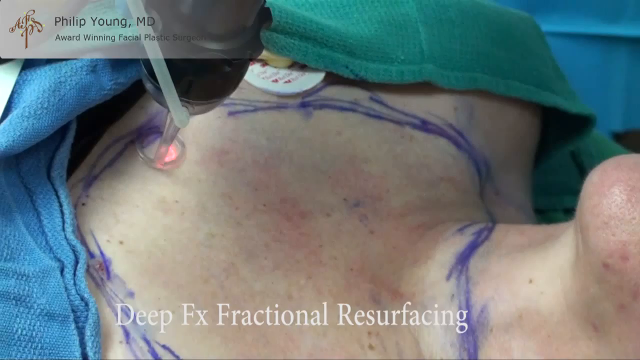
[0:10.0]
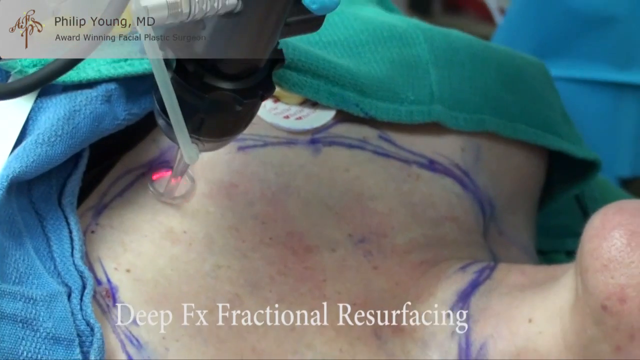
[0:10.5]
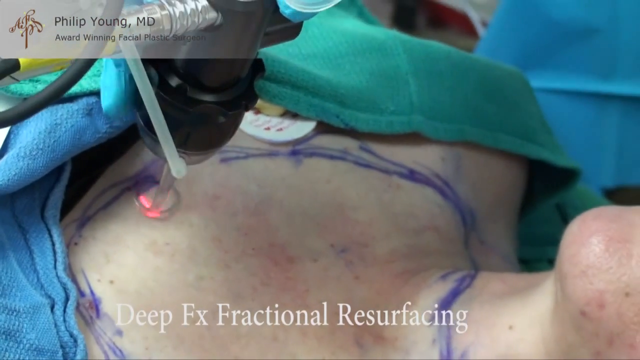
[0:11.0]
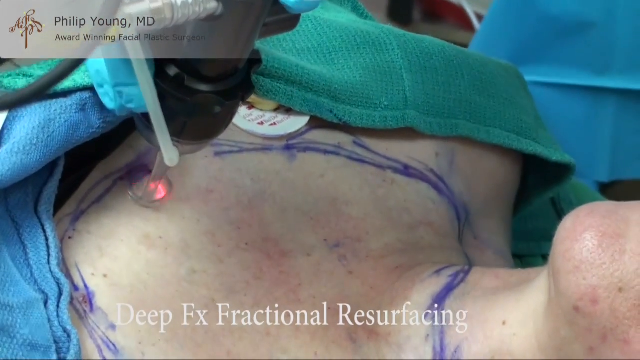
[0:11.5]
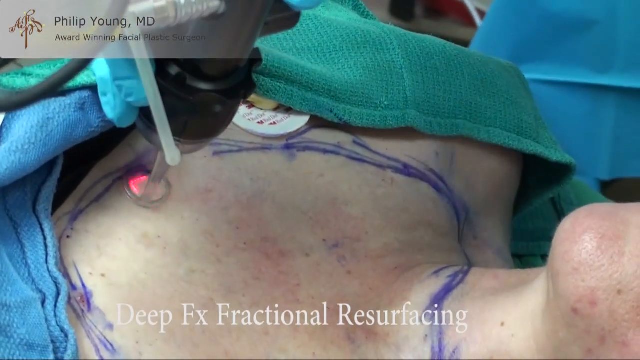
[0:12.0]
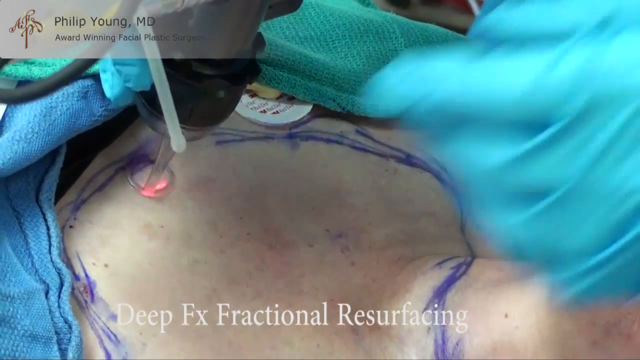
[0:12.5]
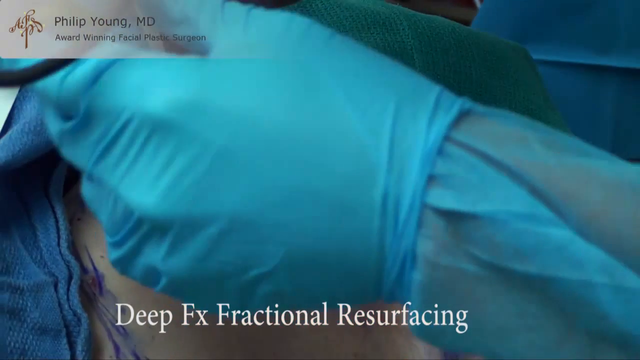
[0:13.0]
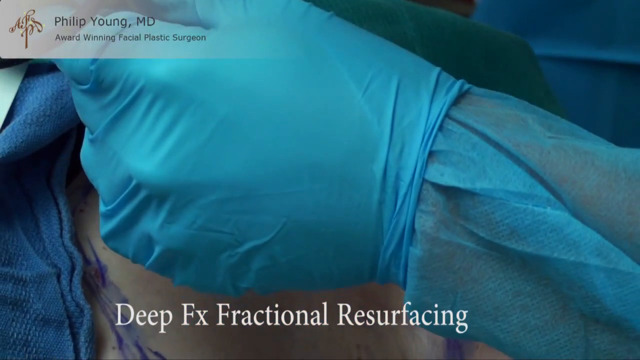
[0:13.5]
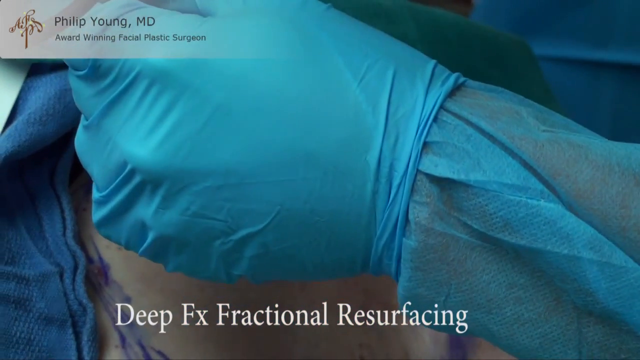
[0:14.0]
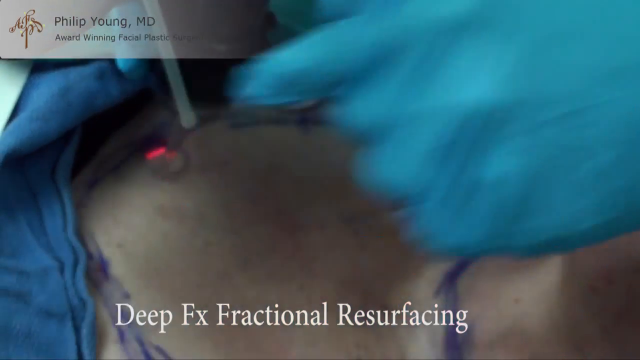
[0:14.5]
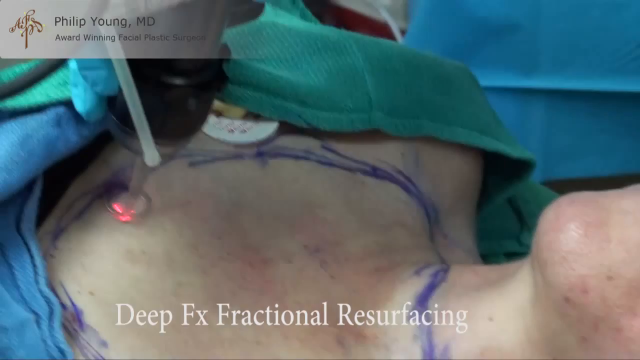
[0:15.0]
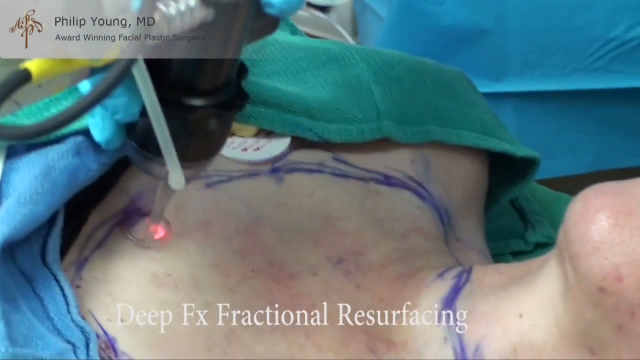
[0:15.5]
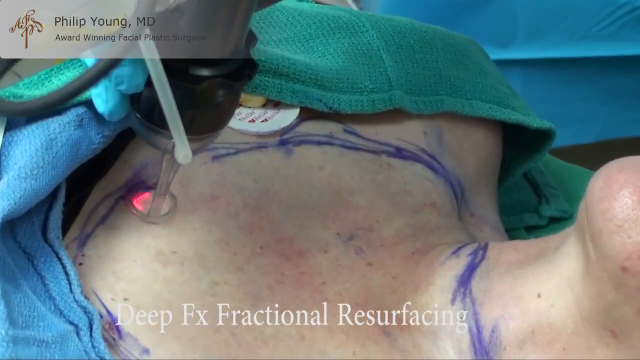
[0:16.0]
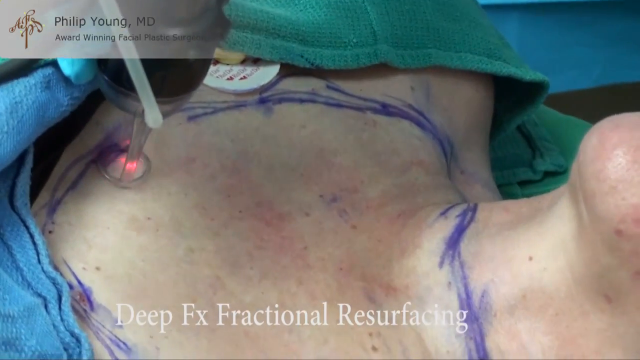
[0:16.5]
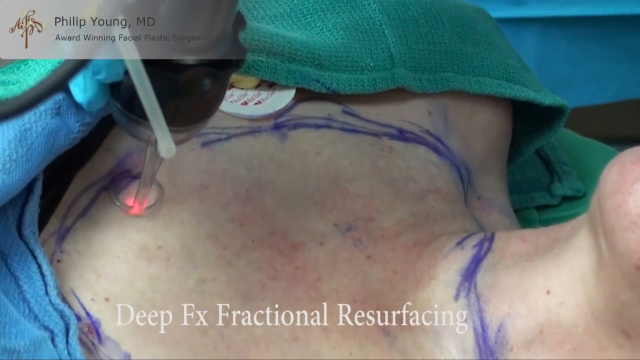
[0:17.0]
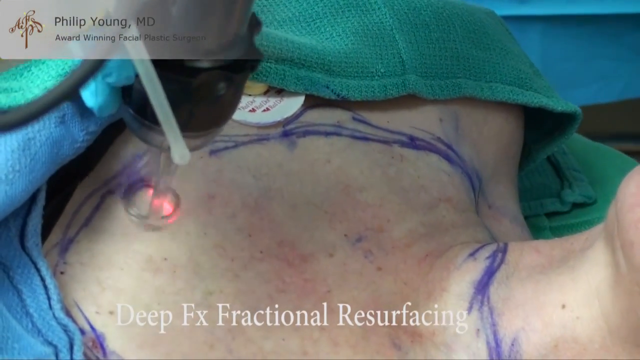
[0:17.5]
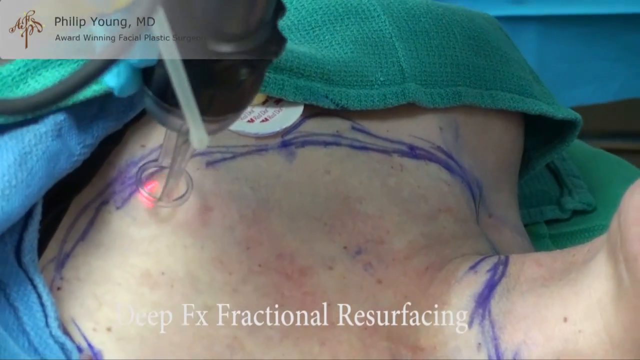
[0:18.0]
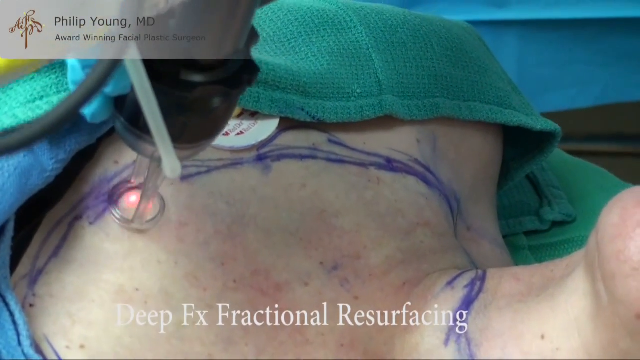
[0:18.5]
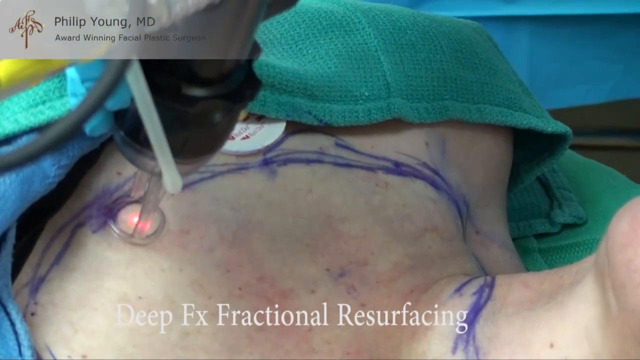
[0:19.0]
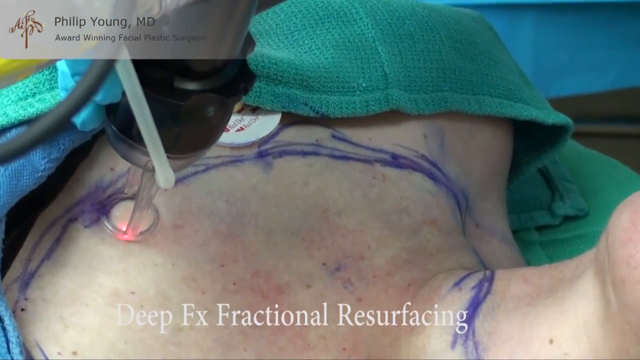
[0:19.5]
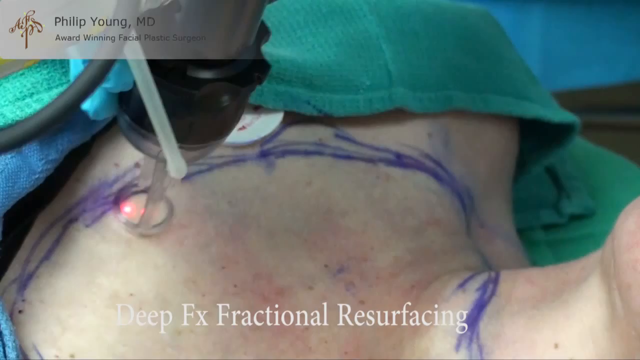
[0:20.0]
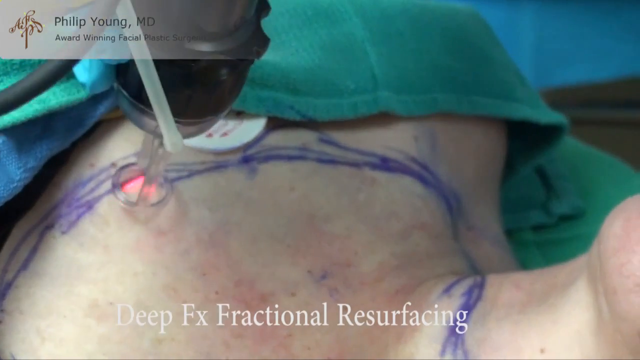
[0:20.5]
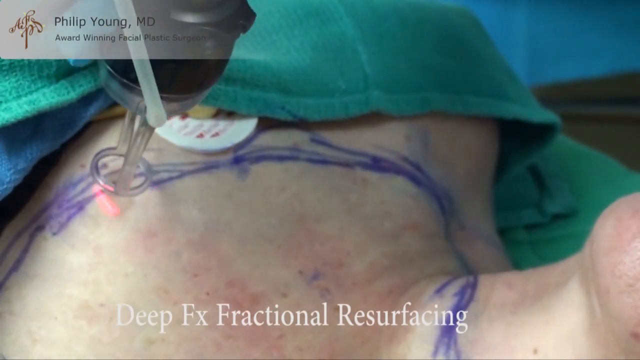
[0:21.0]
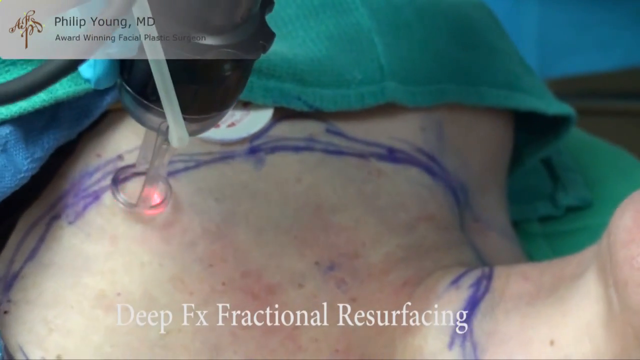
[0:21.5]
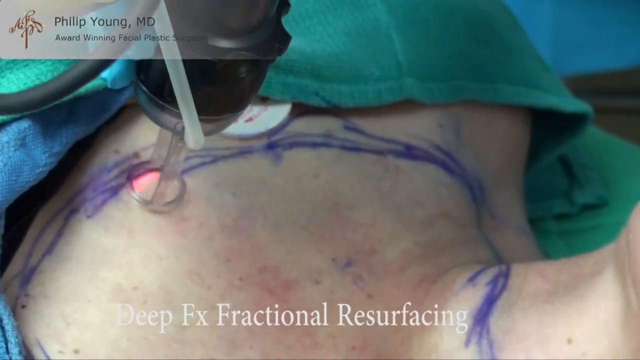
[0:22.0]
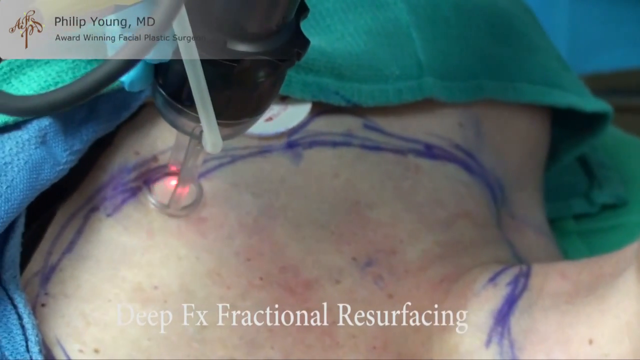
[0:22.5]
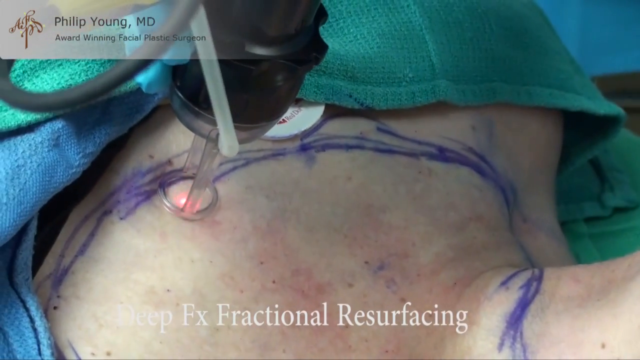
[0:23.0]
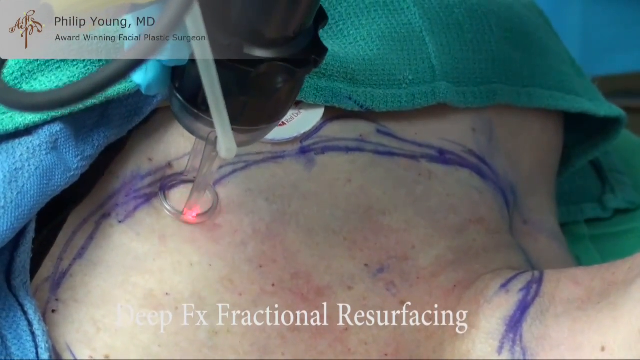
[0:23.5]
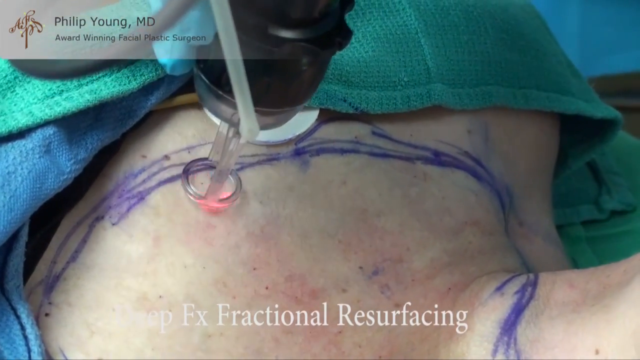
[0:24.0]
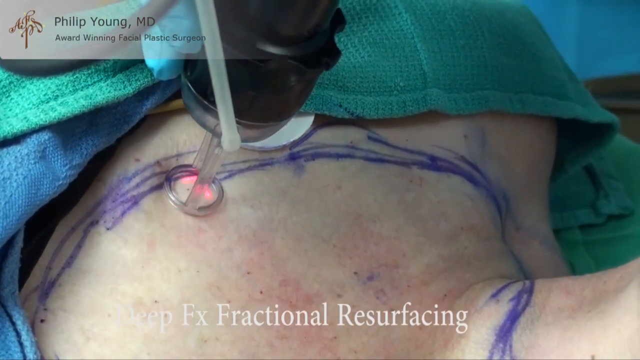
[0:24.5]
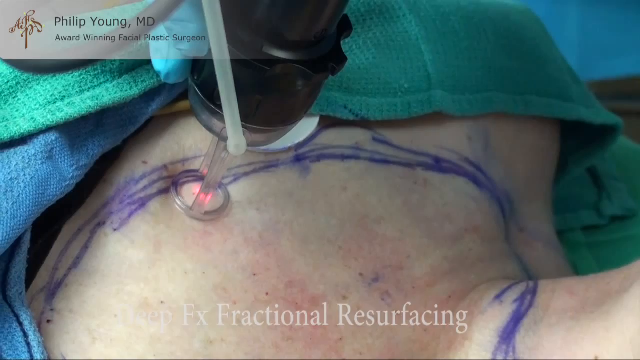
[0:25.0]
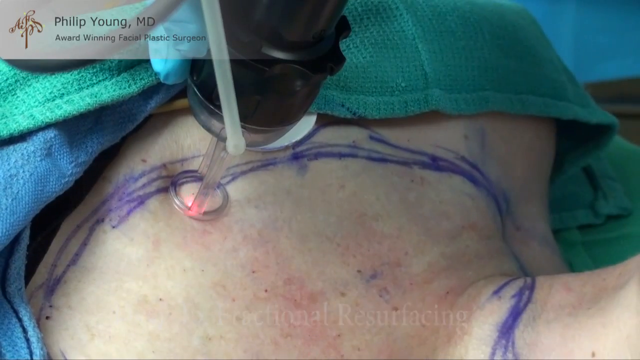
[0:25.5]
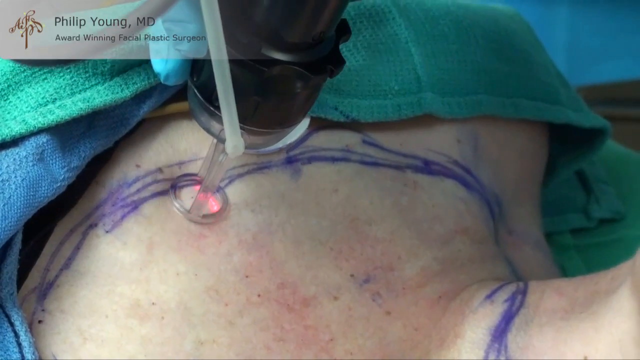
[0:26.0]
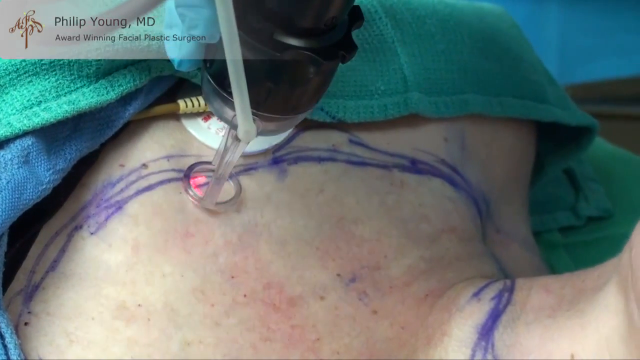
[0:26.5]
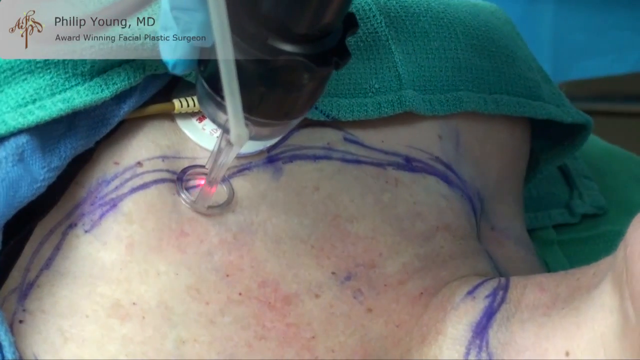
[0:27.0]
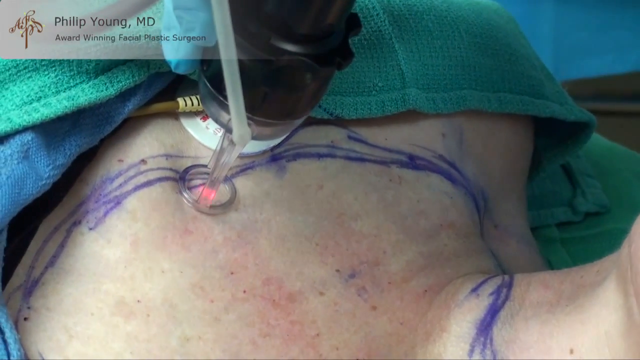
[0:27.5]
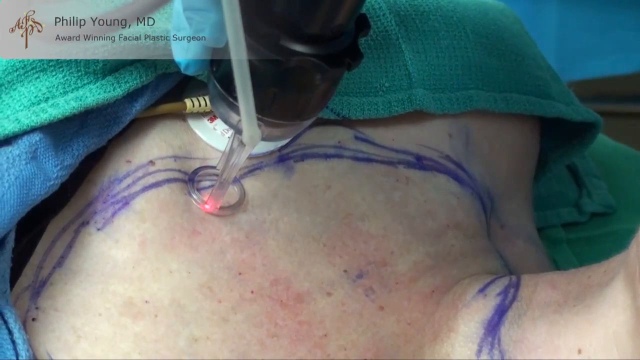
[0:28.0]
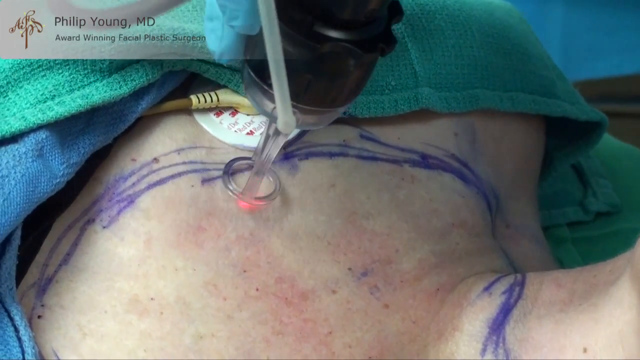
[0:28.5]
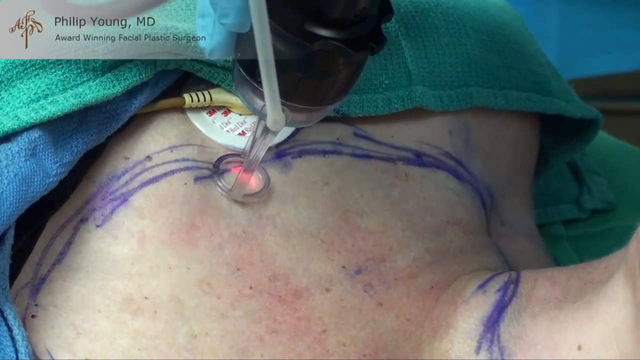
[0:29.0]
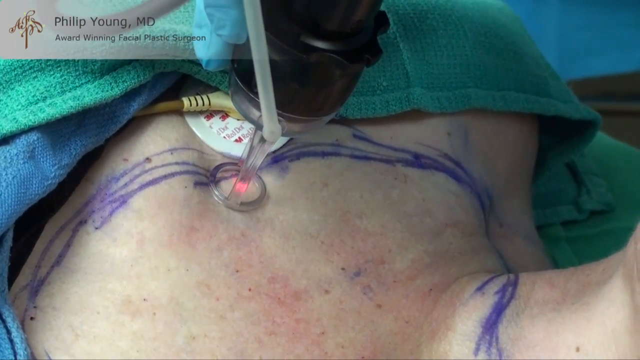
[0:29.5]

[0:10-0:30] A woman is laying down with a lot of blue ink on her chest and neck area. A doctor holds a device with a little silver ring that releases a red light moving in a circle, and the device kind of follows the direction of the blue ink drawn on her. A banner in the top left corner of the screen reads "Philip Young, MD, award-winning facial plastic surgeon", and white text at the bottom of the screen reads "Deep FX fractional resurfacing". He holds the machine on her chest while it spins the red light. He brings his hand forward, sort of grabs the device and adjusts it, and the light continues to spin erratically as he moves it to different areas of her skin.